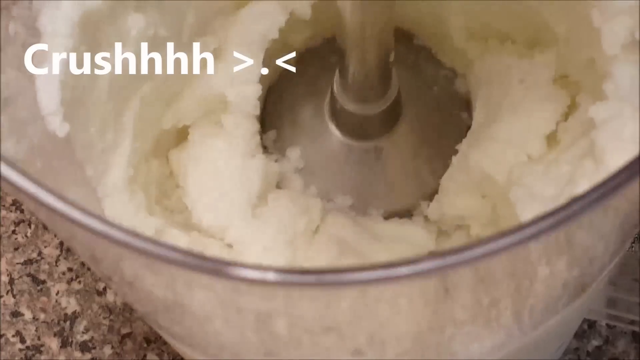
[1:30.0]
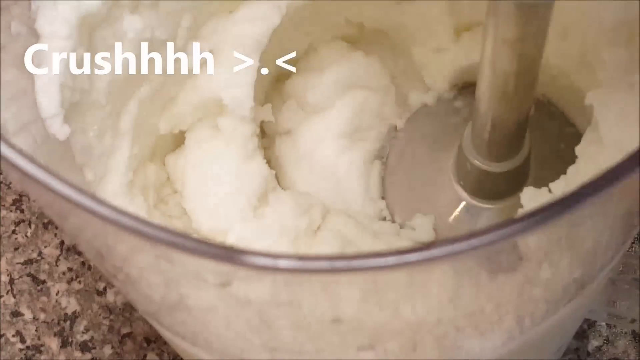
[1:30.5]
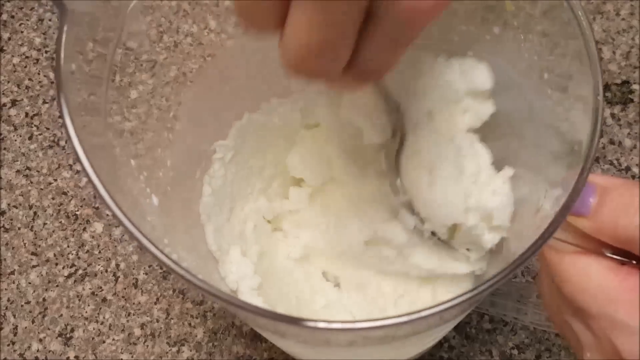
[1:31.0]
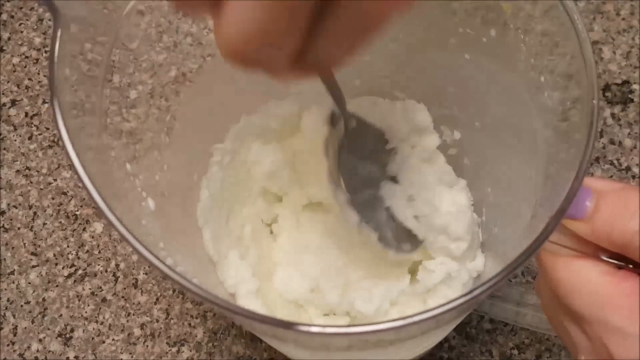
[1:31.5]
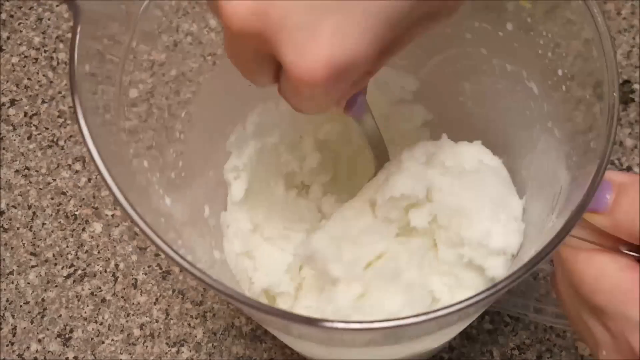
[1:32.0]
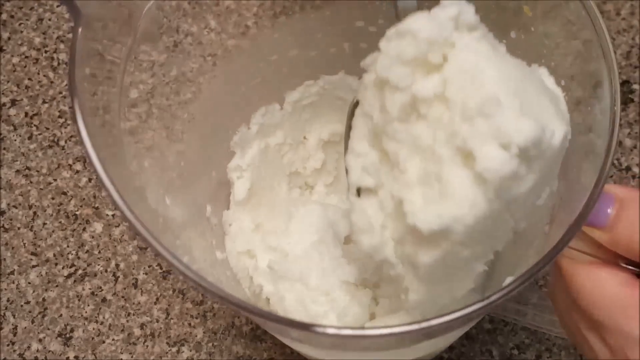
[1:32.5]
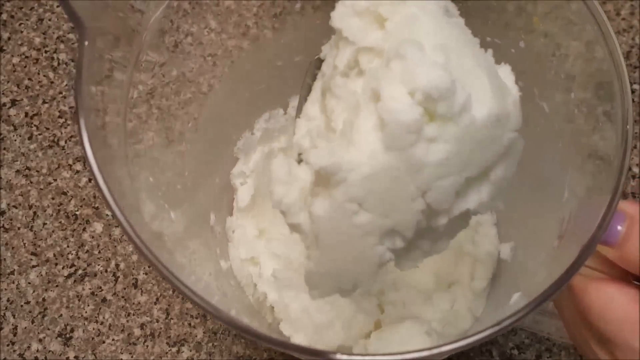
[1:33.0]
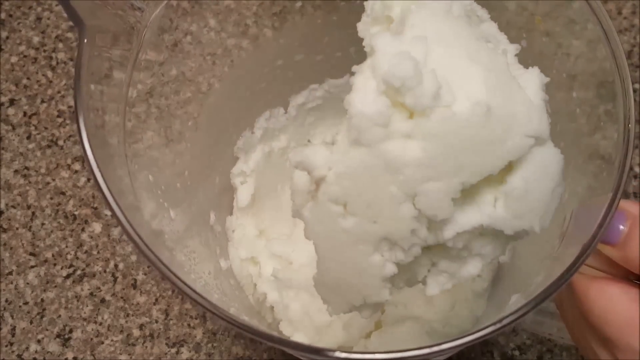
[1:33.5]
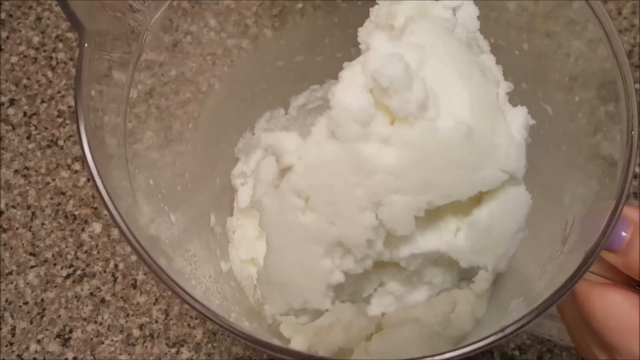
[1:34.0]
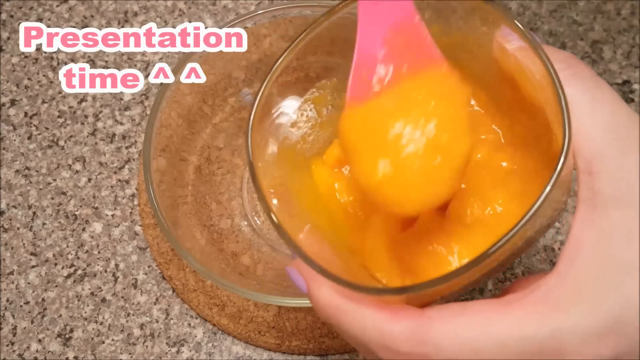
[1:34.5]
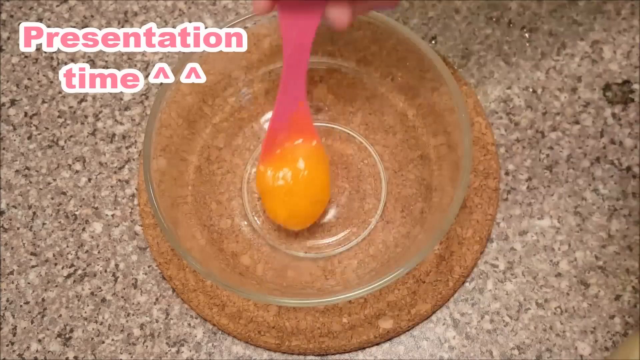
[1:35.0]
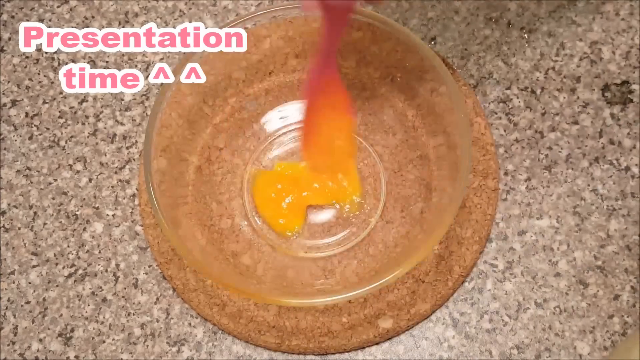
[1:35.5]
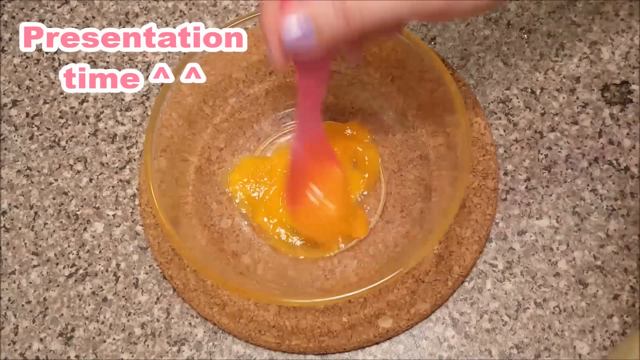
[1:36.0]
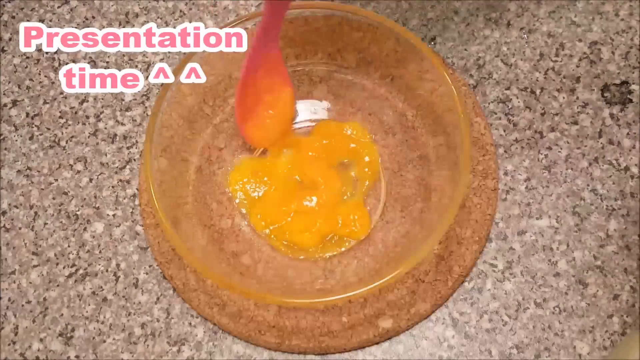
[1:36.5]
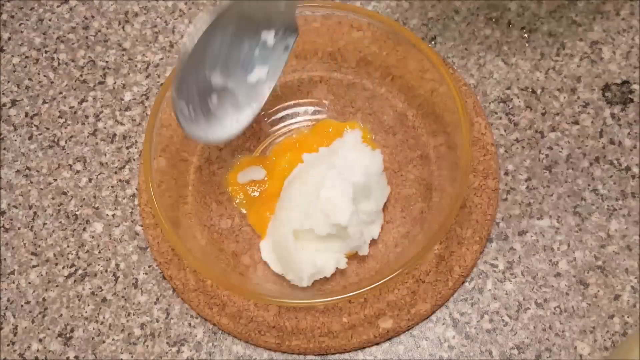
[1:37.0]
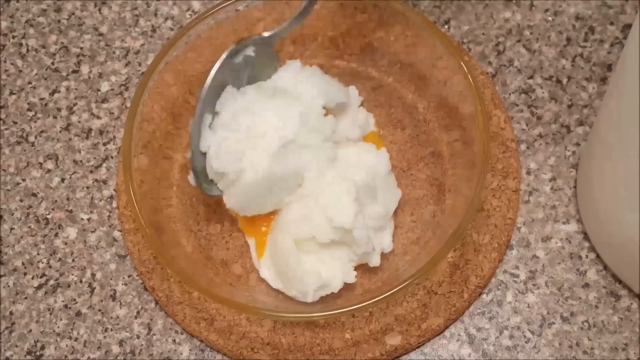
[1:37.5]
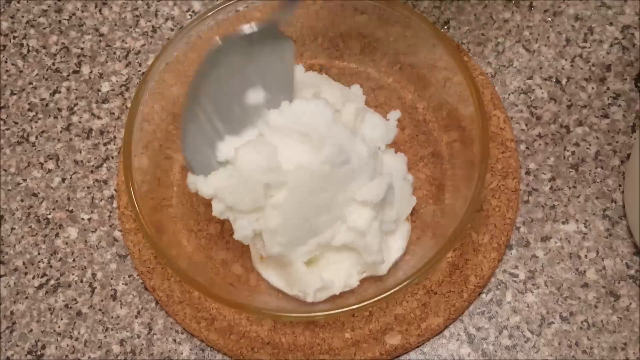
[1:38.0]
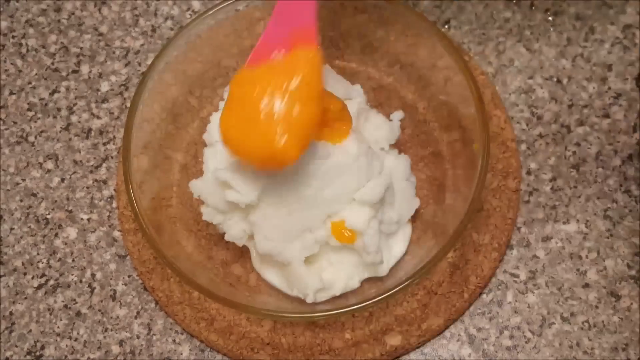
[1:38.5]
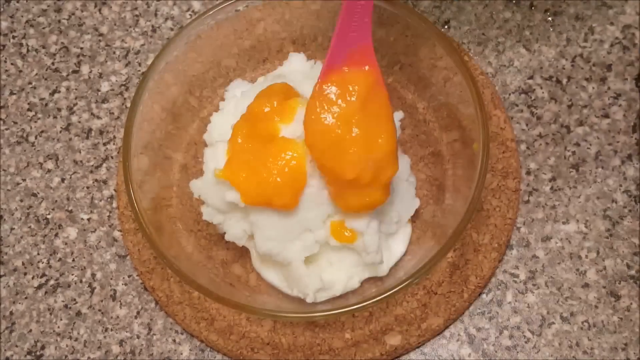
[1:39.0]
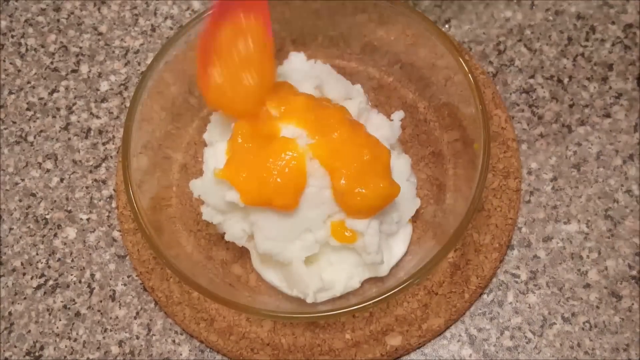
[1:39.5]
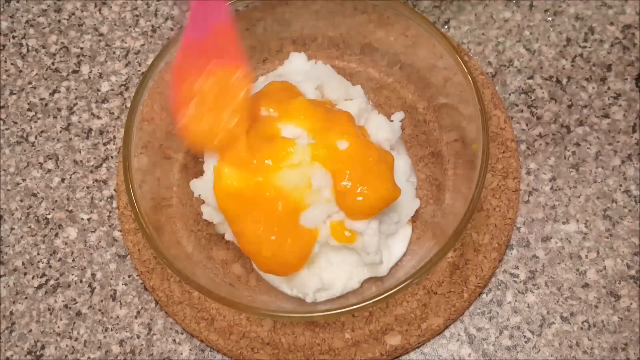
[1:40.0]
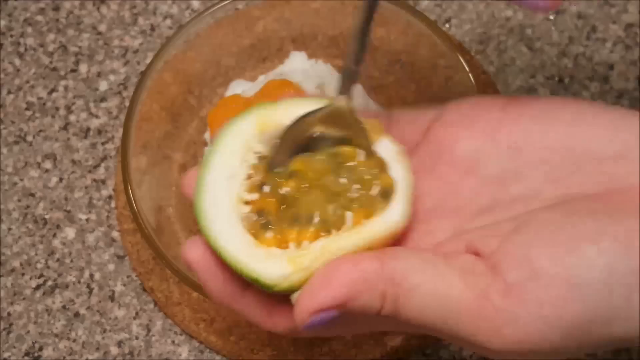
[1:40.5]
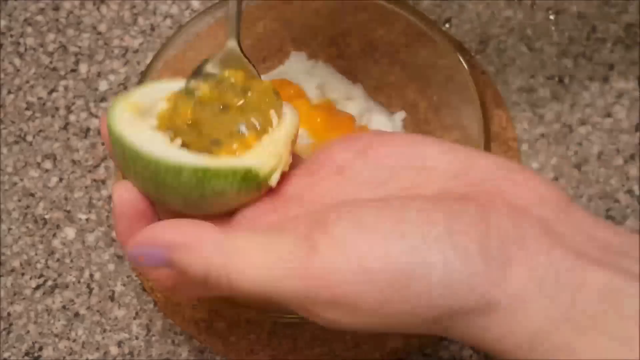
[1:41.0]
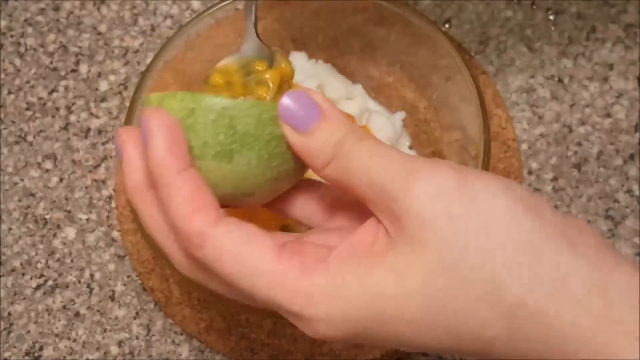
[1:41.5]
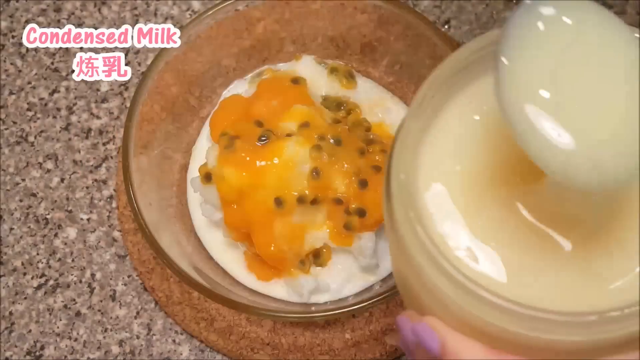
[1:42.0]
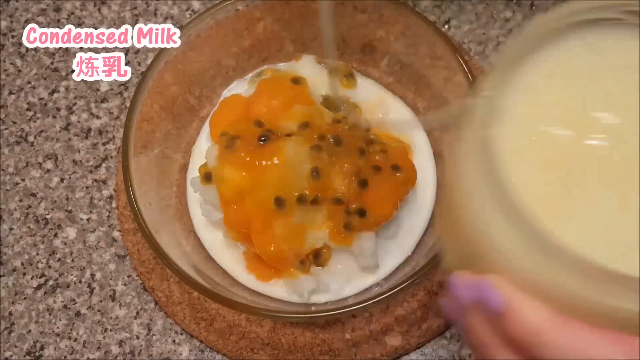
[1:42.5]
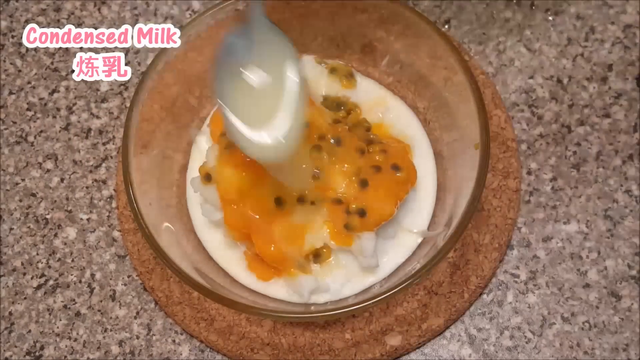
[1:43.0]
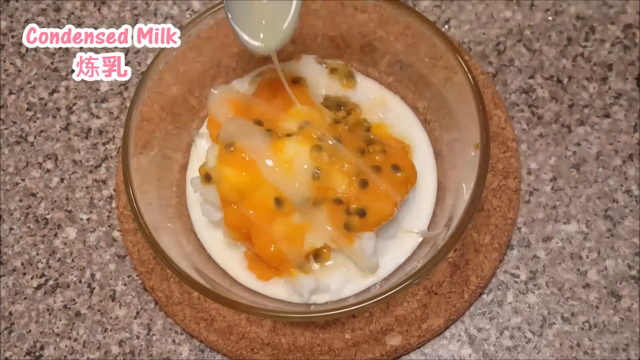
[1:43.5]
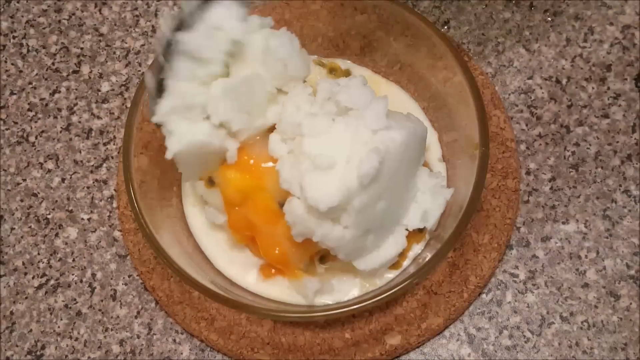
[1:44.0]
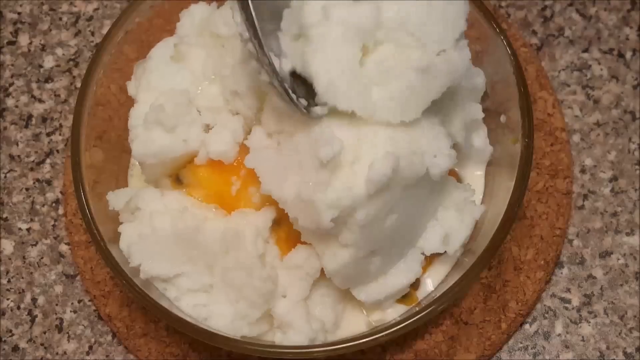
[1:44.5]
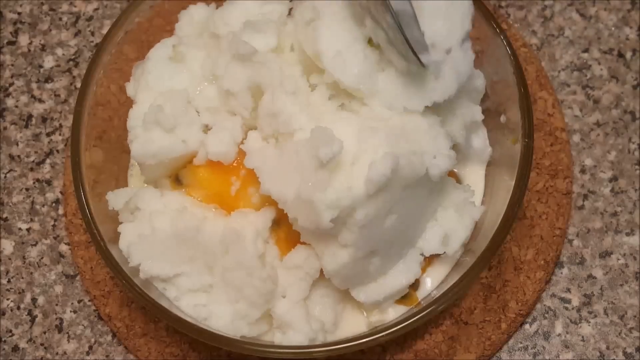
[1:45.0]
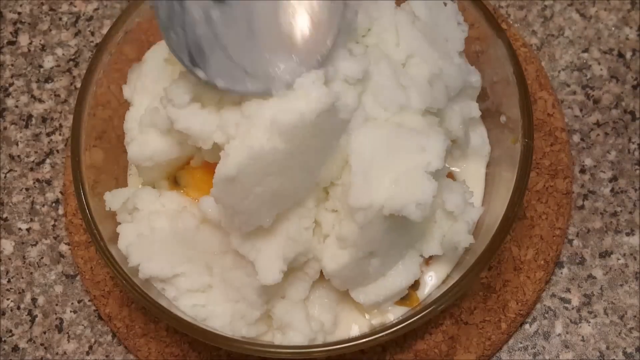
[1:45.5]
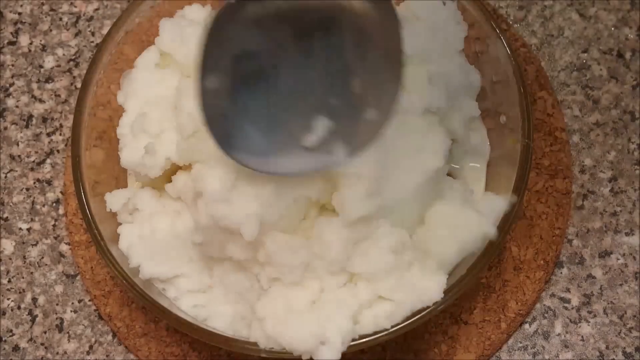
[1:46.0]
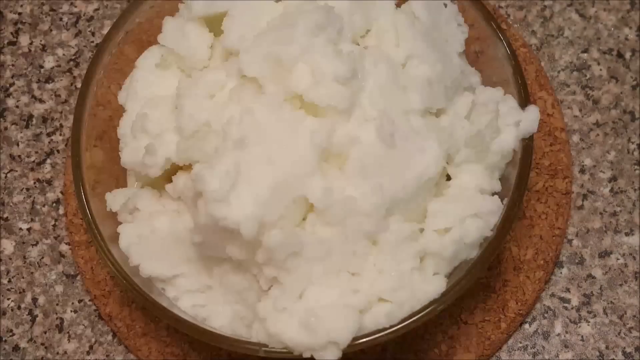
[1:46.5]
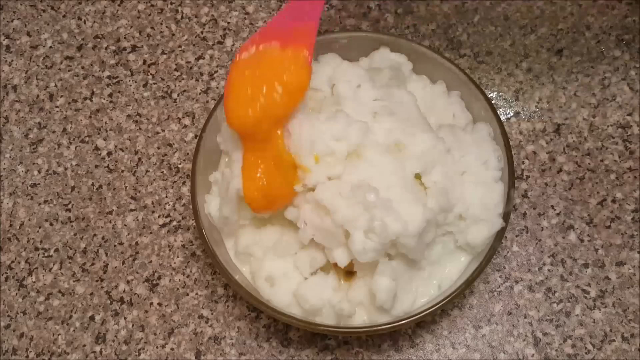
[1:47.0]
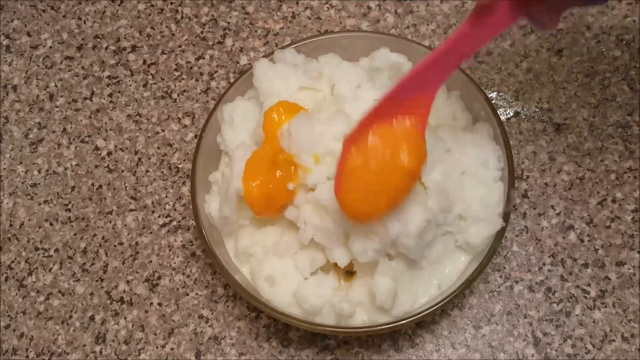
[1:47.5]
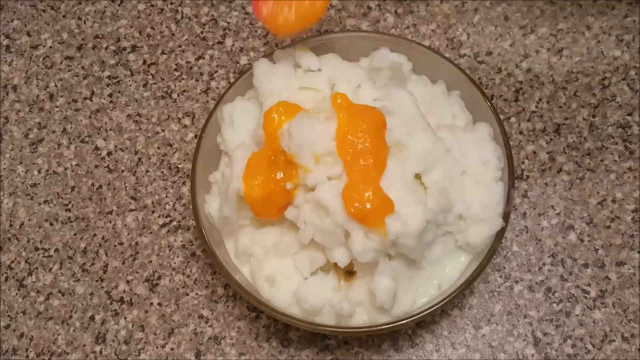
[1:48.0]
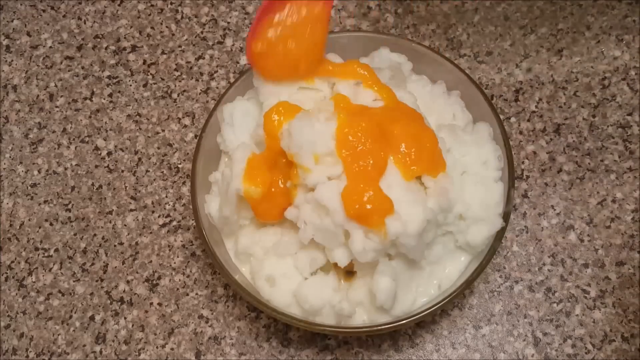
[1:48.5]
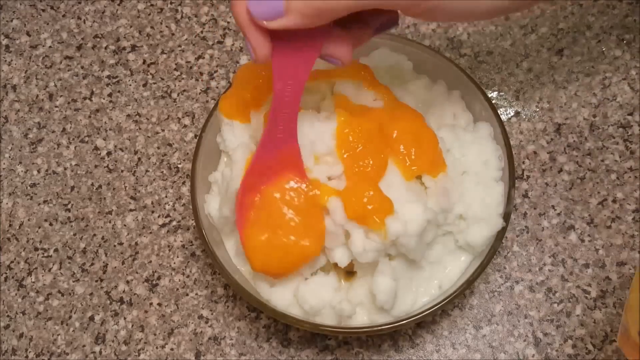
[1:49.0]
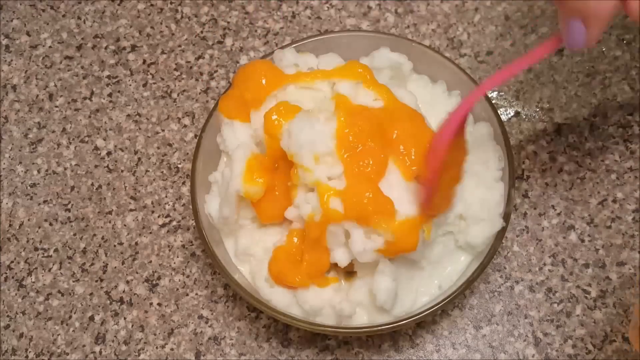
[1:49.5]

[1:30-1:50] The person crushes the ice together with condensed milk, forming a sort of icy milk. The dish is assembled on a transparent, sort of orange dish on a sort of marble background: ice and apparently mango puree are added, then the insides of the passion fruit, a drizzle of condensed milk, more milky ice, and more mango puree on top, in a stacking style of presentation. No people or animals appear, only the person's assembling of the dish, and there are few settings or transitions on screen.